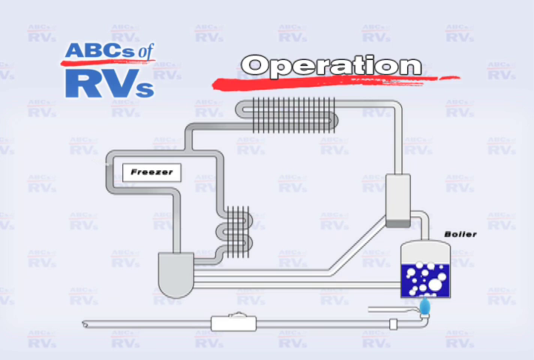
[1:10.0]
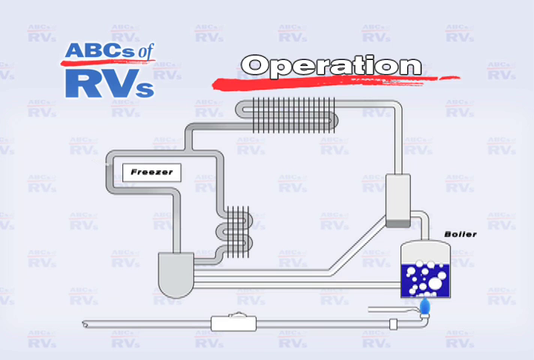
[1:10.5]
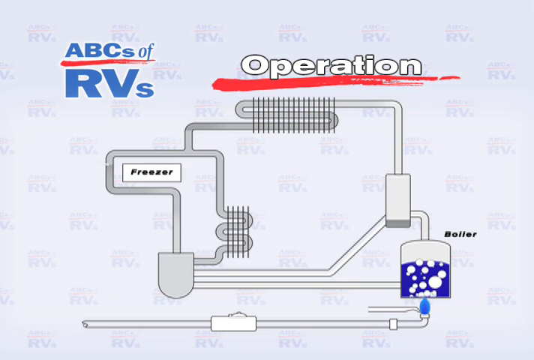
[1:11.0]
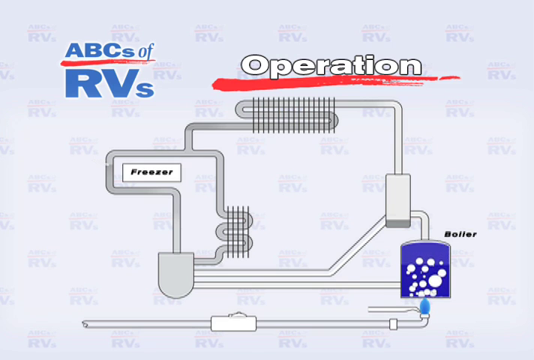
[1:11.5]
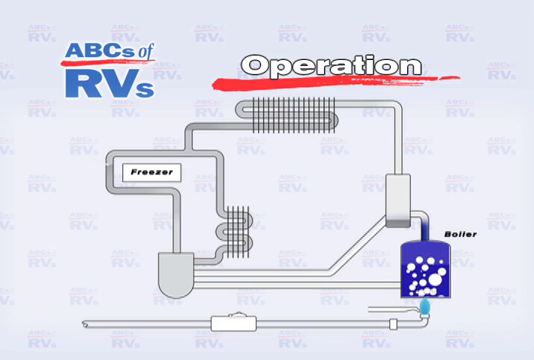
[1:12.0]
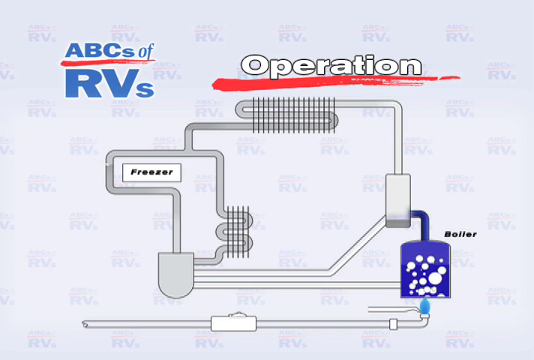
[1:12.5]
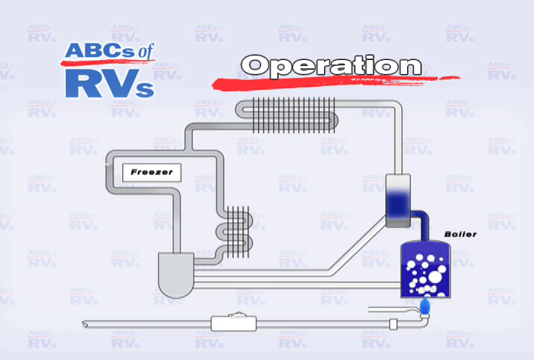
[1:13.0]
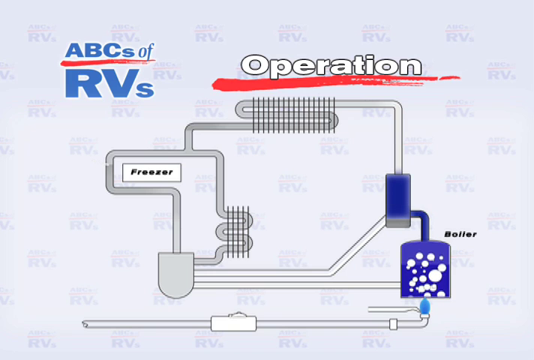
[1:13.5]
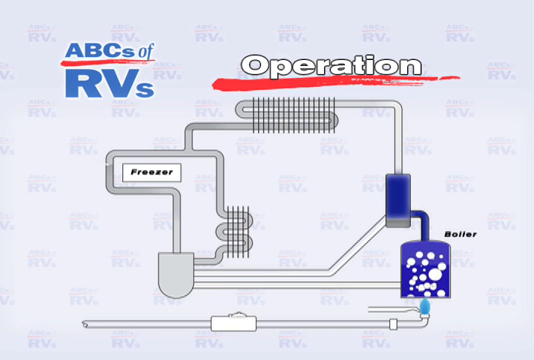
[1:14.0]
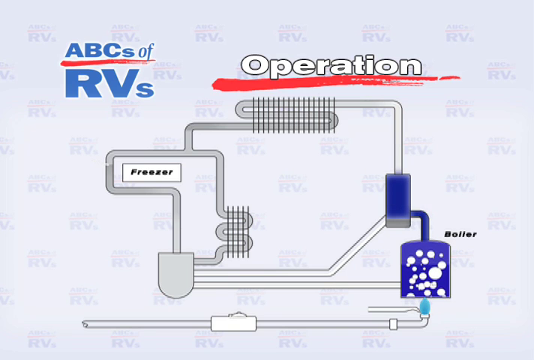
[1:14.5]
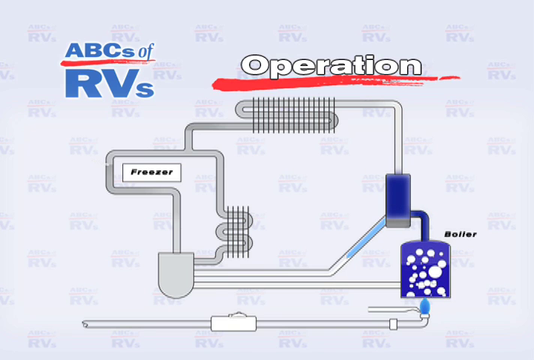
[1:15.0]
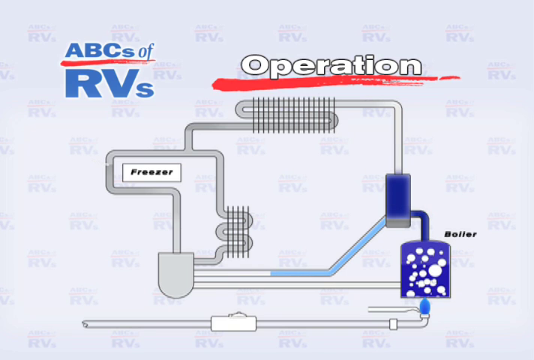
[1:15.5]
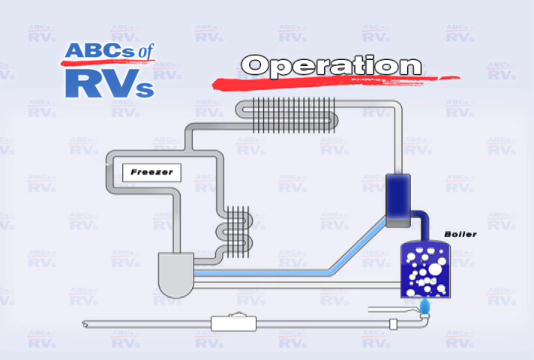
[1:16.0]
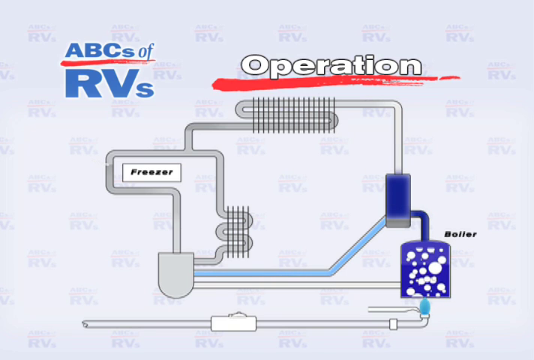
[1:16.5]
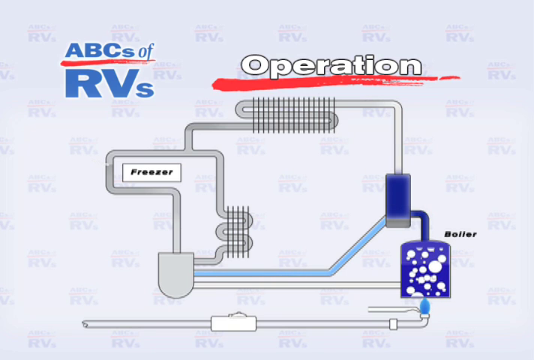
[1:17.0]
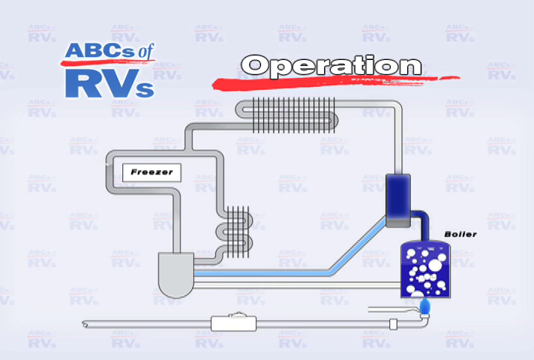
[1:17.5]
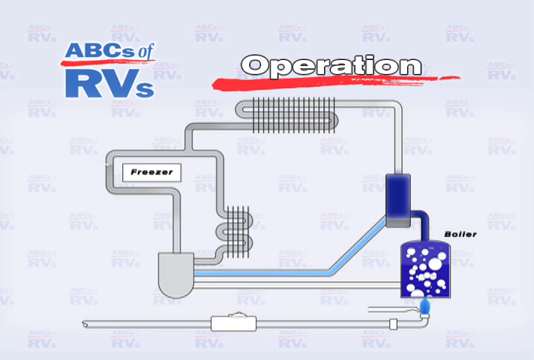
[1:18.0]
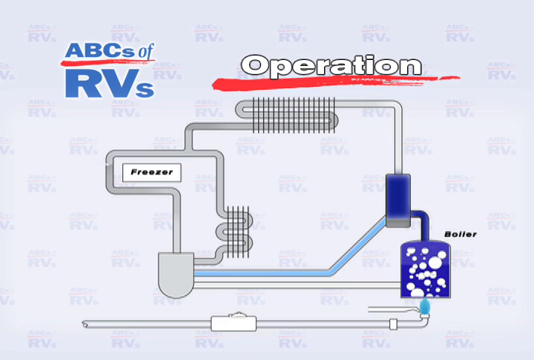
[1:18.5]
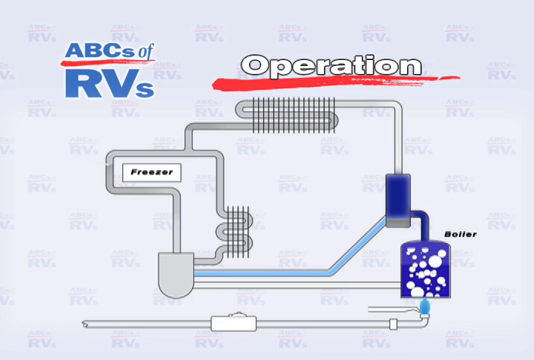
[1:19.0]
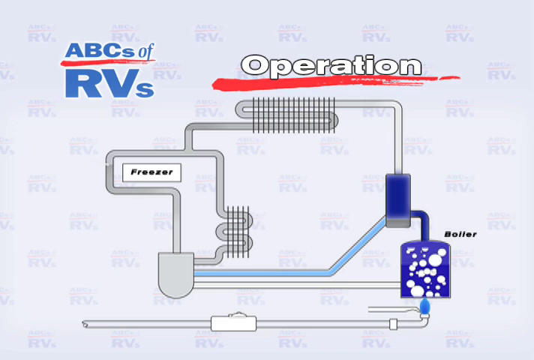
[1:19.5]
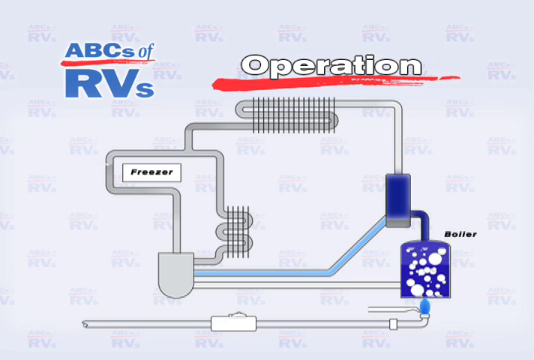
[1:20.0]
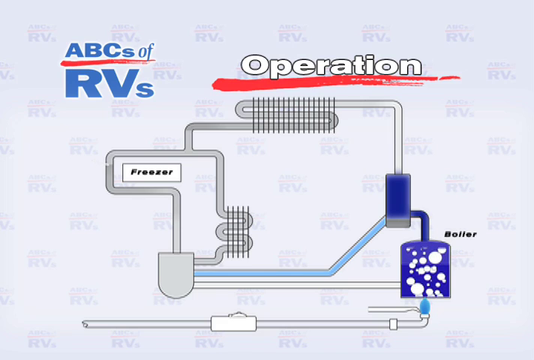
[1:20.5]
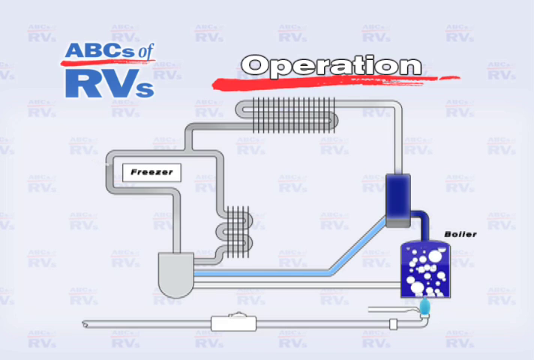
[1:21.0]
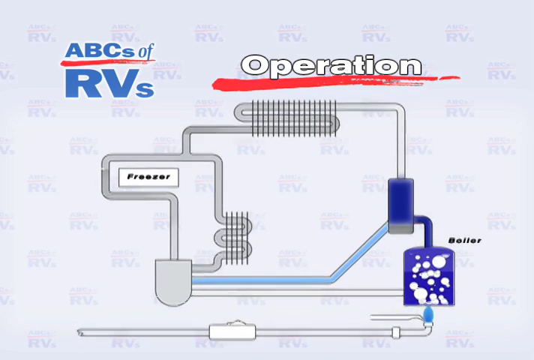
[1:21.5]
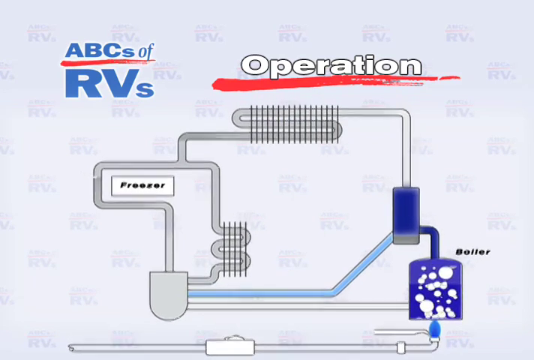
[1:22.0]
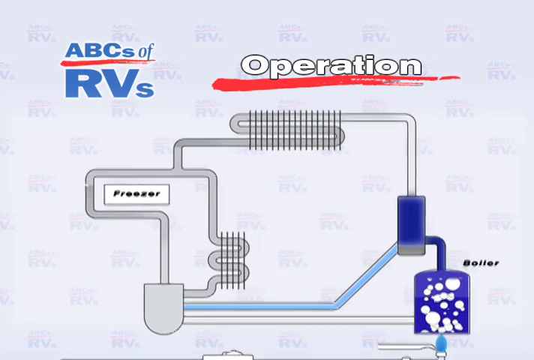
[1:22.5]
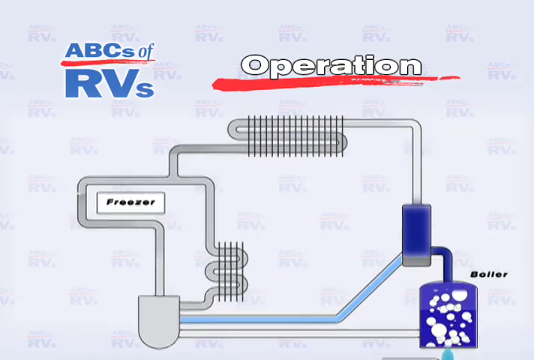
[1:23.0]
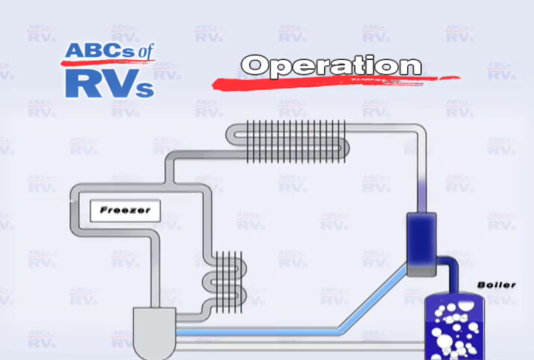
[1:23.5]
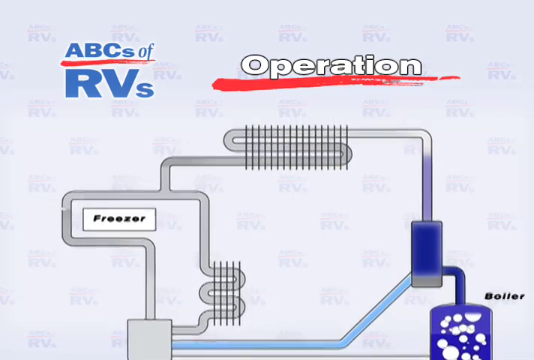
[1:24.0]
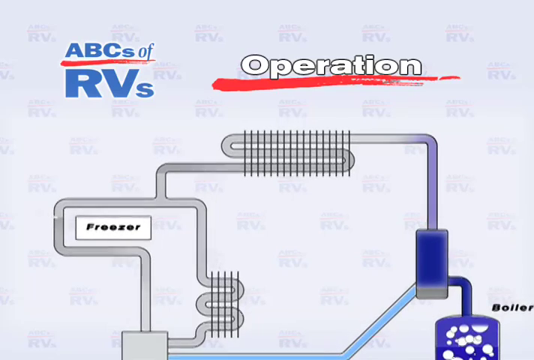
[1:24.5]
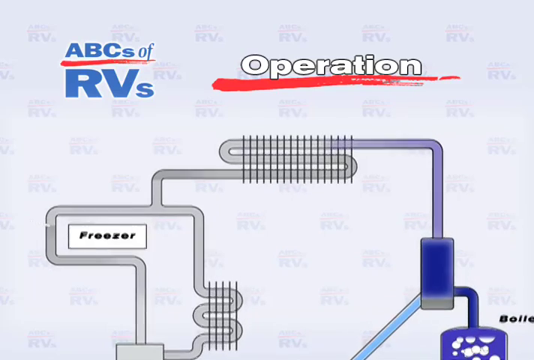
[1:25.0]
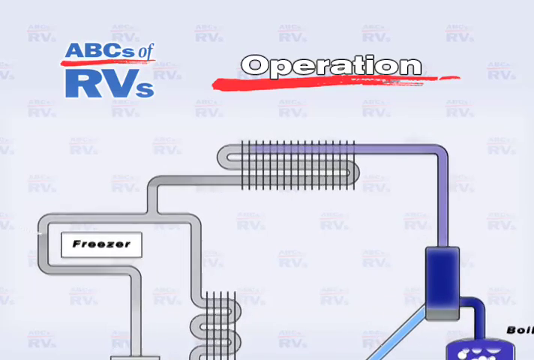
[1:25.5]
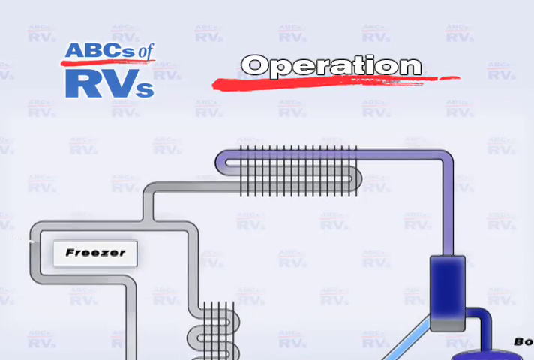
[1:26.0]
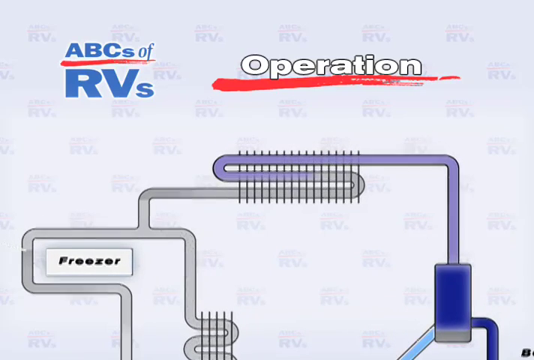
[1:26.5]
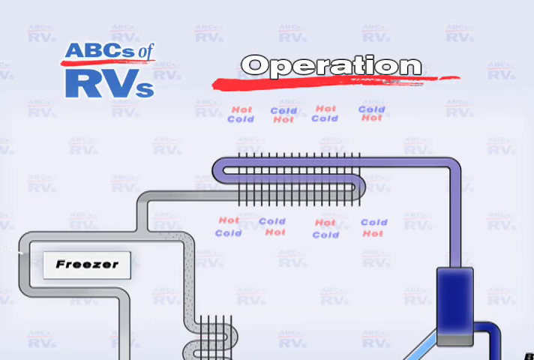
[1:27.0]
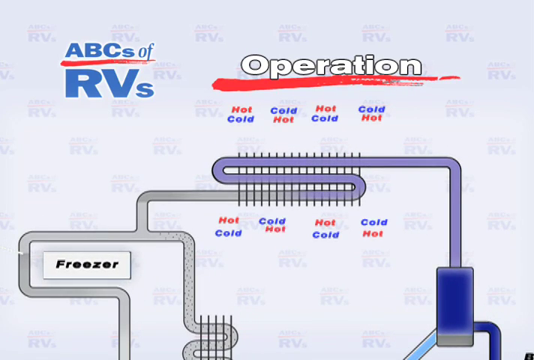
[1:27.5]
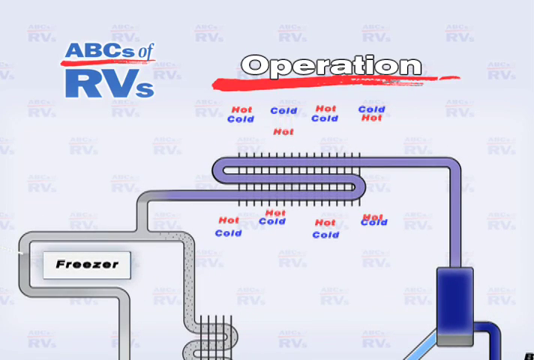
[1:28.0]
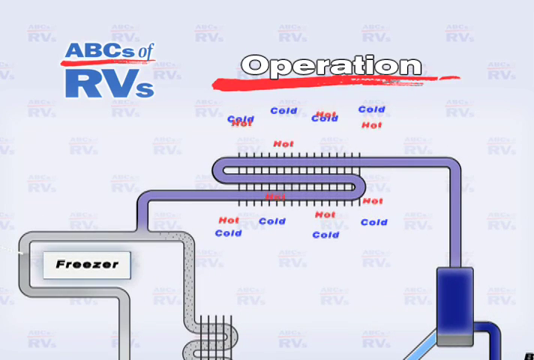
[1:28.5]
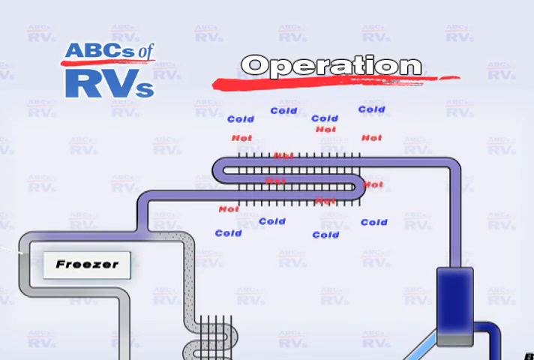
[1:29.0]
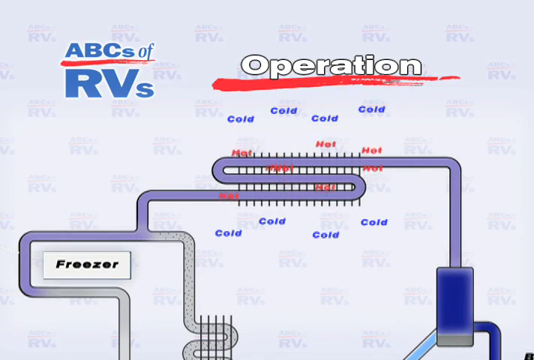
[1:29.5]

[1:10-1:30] The blue RVs are shown being pumped to the other pipe and going straight, changing into water and then into gas. The cold and hot RVs meet, and everything combines and goes straight to the freezer, with the red and blue RVs combined together.